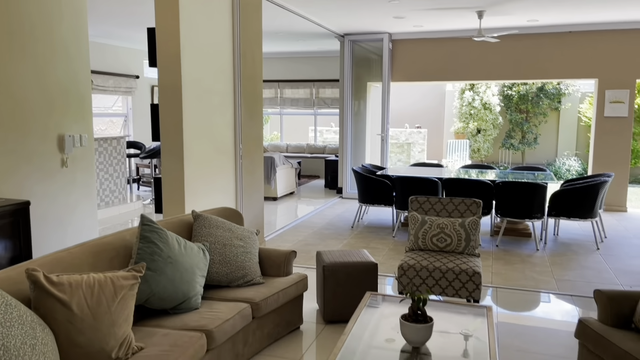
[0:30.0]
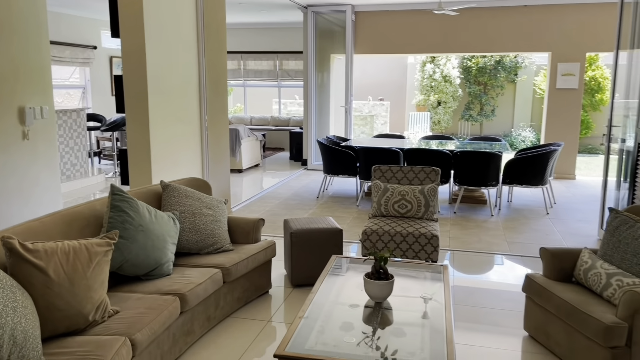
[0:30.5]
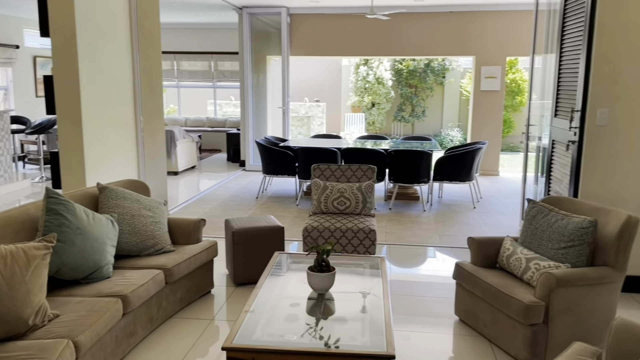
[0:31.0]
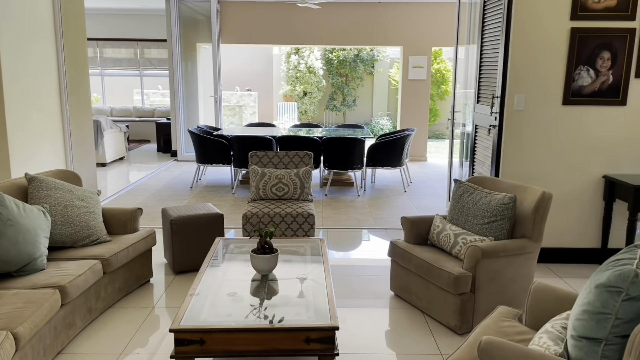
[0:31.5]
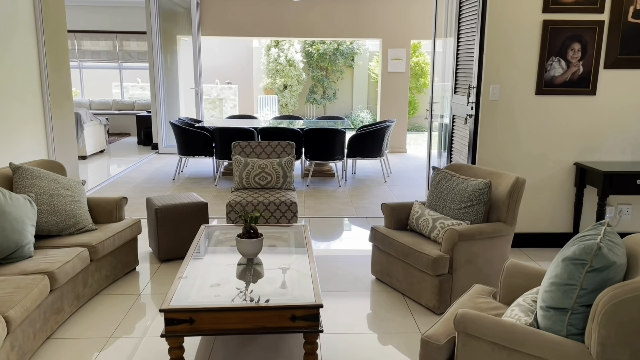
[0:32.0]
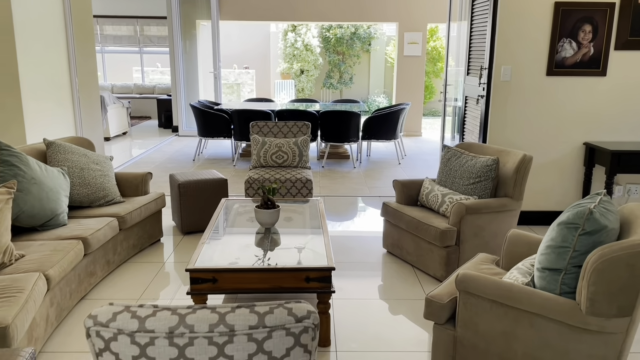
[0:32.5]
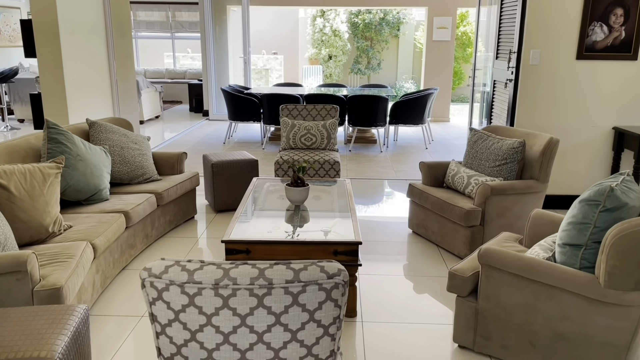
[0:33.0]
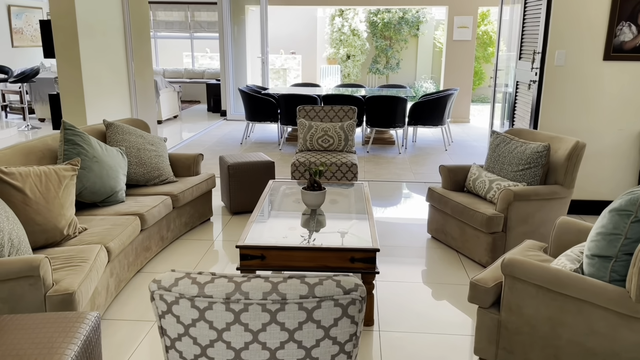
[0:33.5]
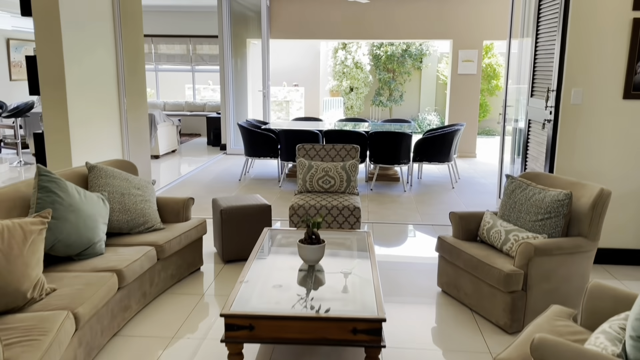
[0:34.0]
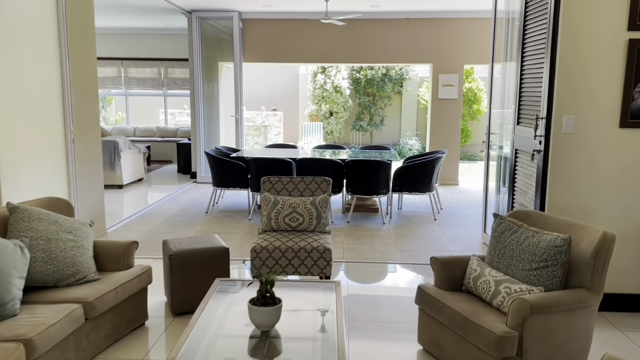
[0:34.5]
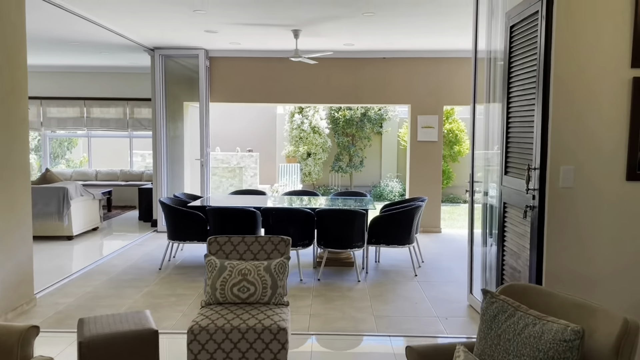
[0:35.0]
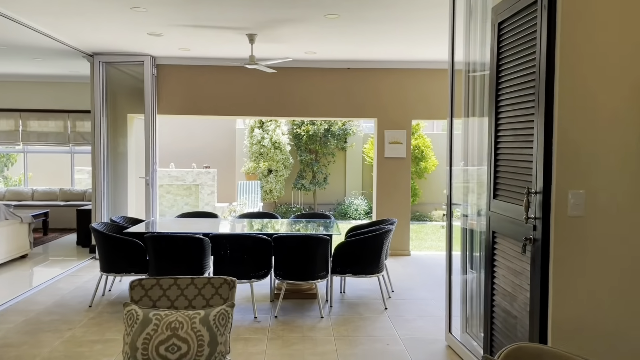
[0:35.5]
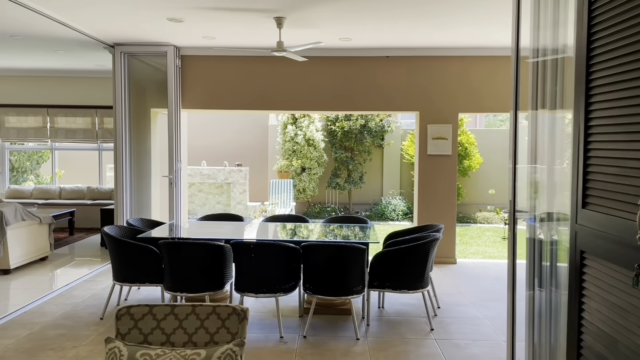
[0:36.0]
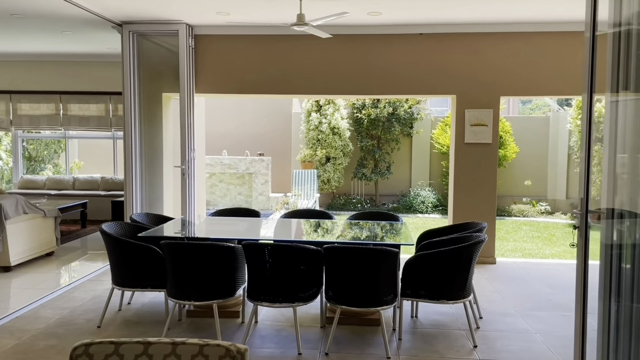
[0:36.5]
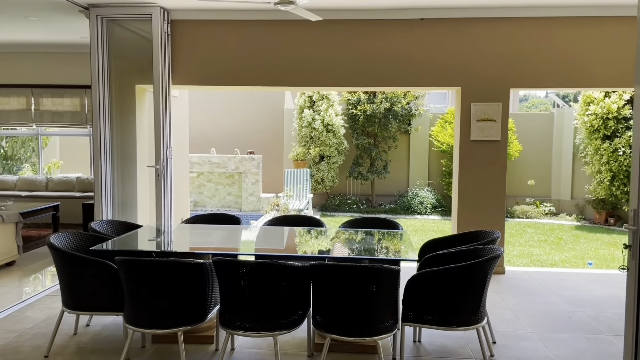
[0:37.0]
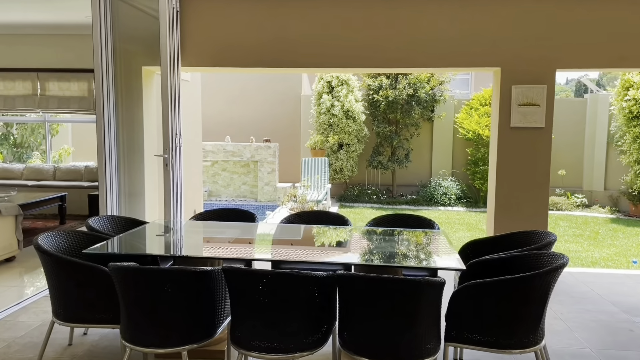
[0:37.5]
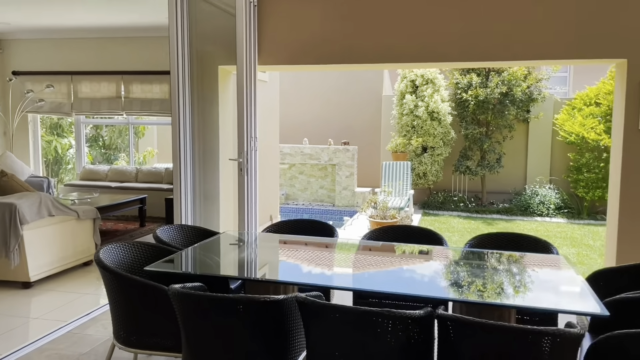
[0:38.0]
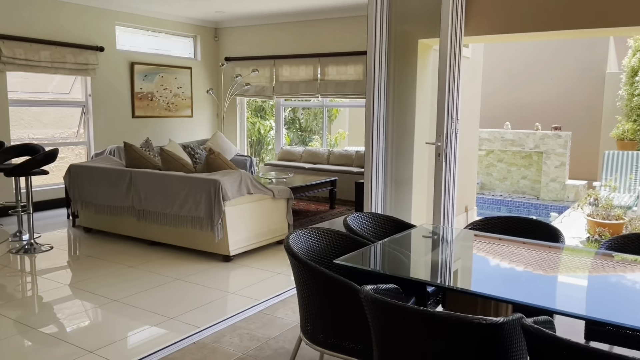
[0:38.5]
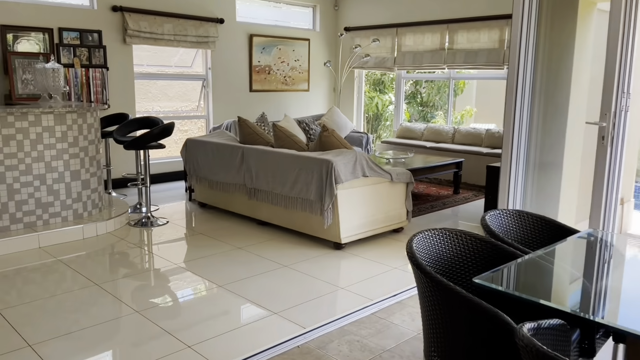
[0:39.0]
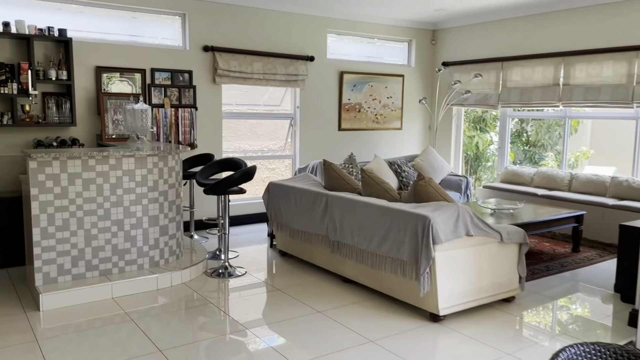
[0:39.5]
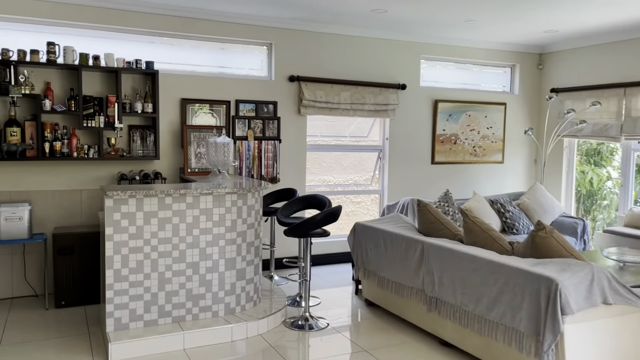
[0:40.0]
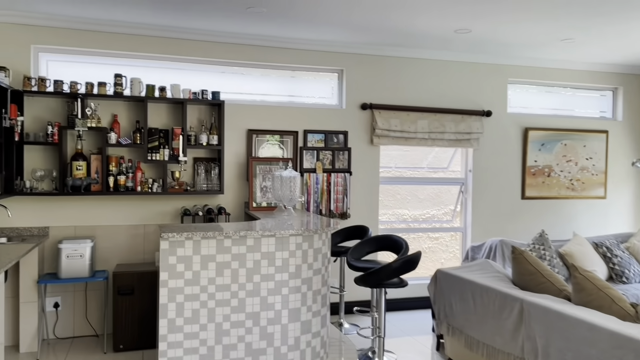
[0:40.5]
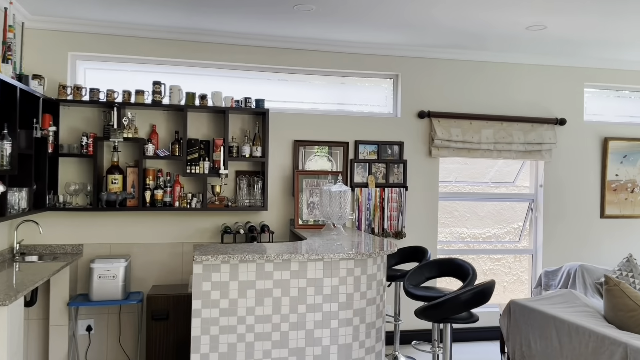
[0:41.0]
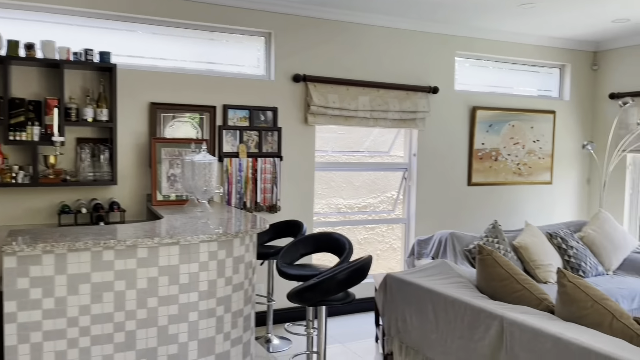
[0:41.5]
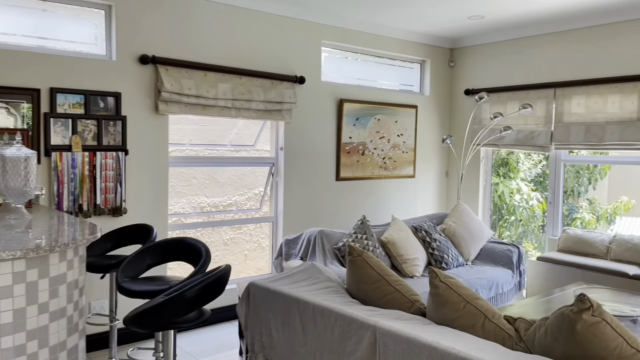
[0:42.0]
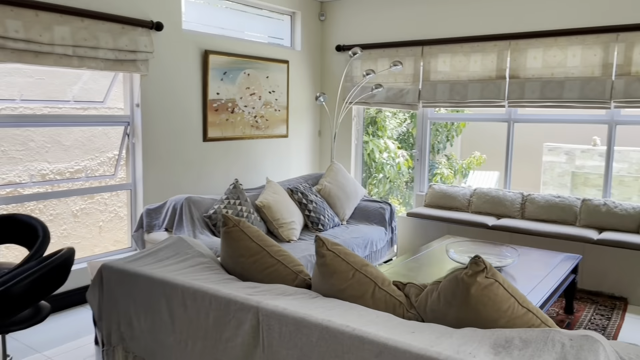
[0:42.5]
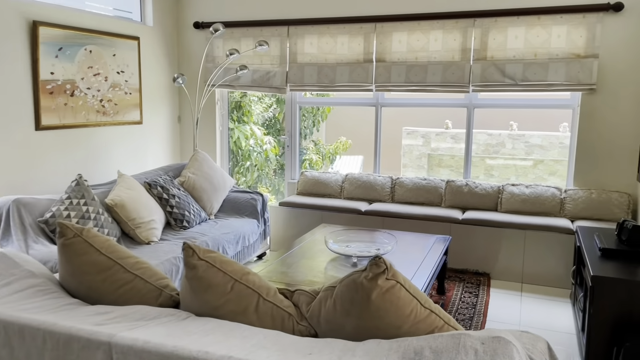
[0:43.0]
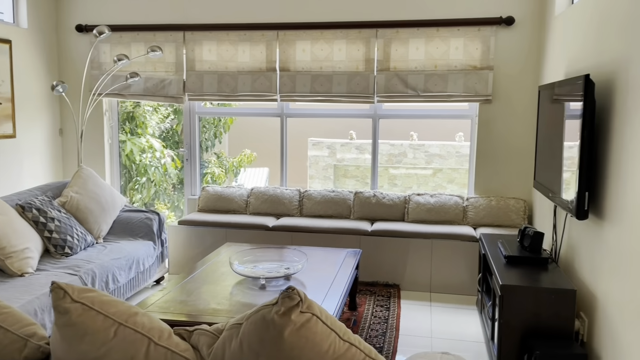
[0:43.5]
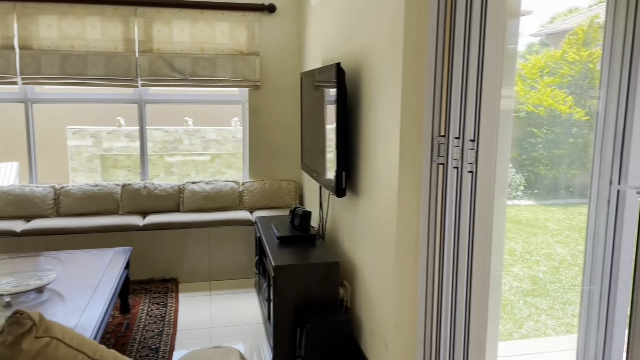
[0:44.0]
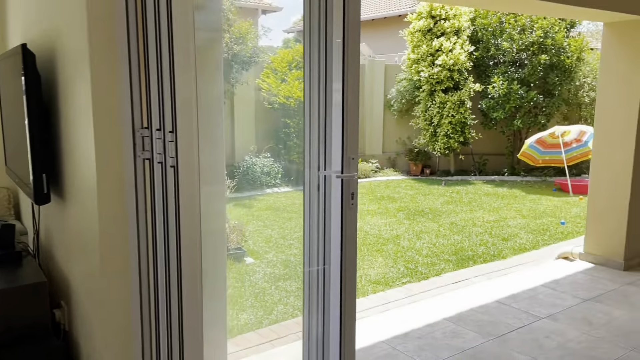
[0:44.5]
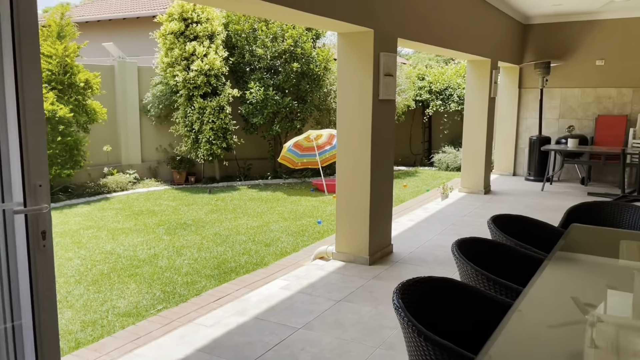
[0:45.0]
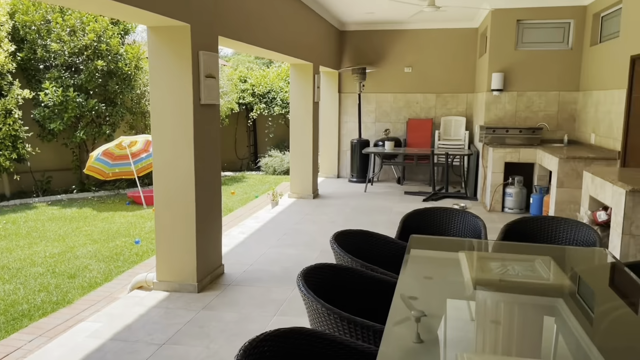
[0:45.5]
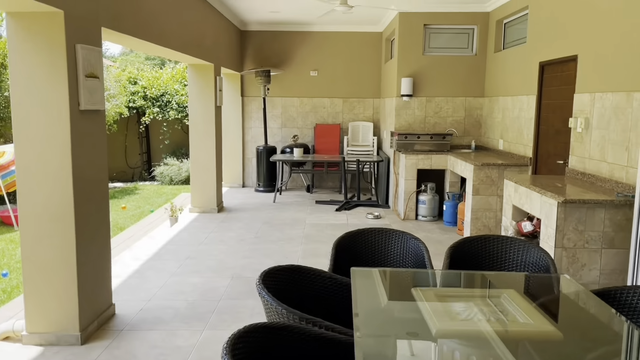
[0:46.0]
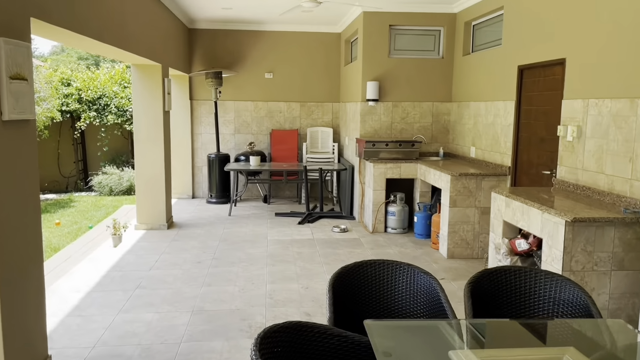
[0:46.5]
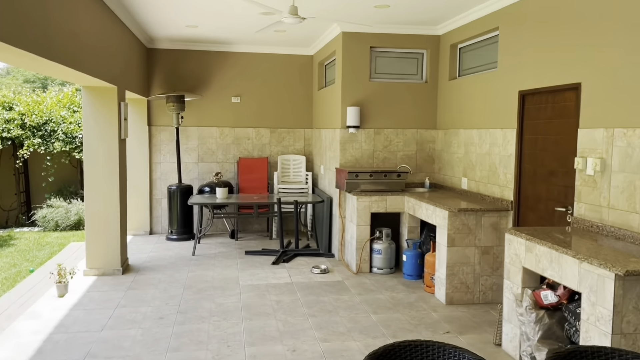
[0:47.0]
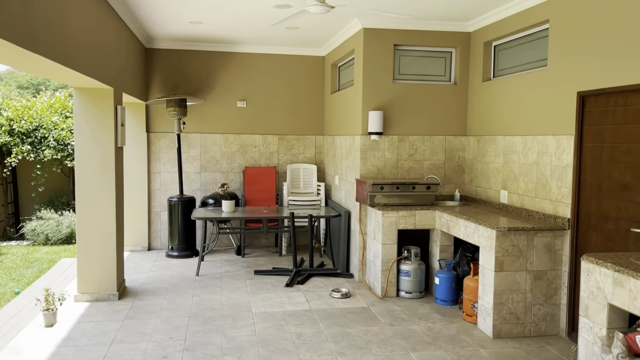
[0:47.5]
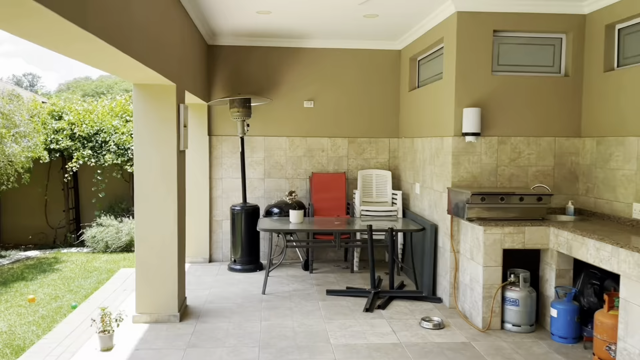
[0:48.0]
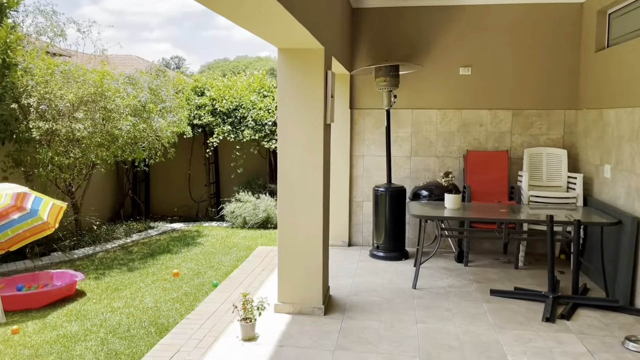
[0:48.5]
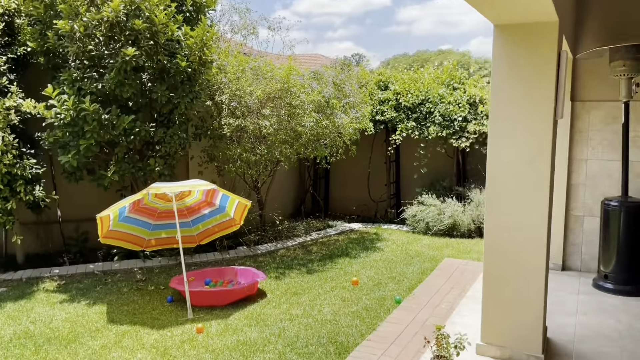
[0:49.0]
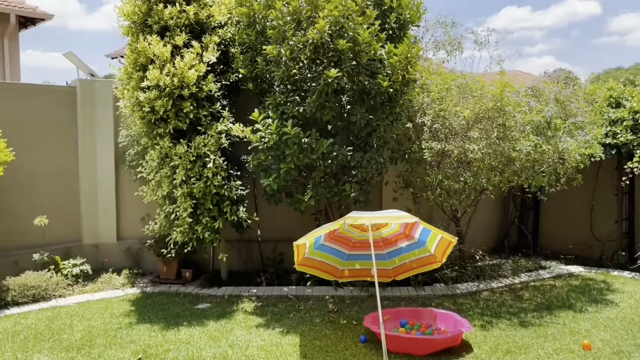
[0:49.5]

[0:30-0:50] In the living room area there is a little rectangular glass coffee table, kind of, with the brown couch to the left and what looks like a sofa chair in the same style as the couch to the right, plus a more normal chair at the front, facing the camera's side. On top of the table is a little plant in a white vase. As the camera keeps moving further back, two more chairs are visible, symmetrical to the other two. Further in, another glass table has ten dark brown chairs around it that look more like garden chairs. More to the left is a bar area: a shelf suspended on the wall holds a lot of different alcohols, and its top is filled with different types of mugs. There is a bar counter, and right next to it are three sofa seating areas with a TV on the wall. All the sofas are a kind of beige colour.